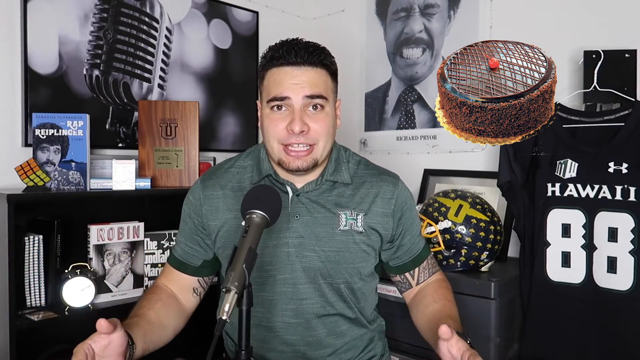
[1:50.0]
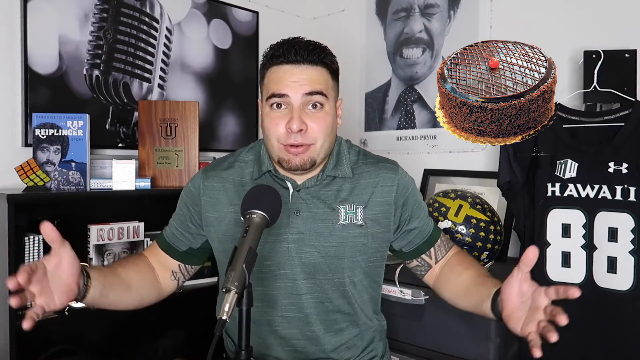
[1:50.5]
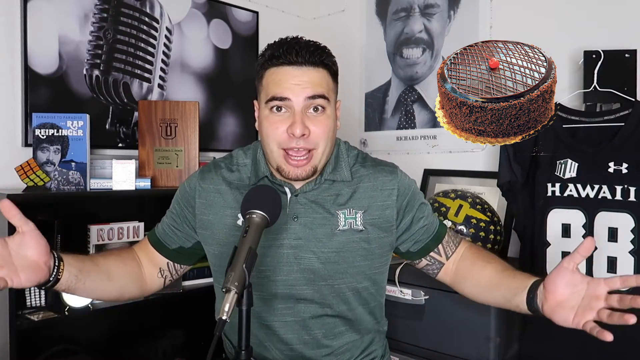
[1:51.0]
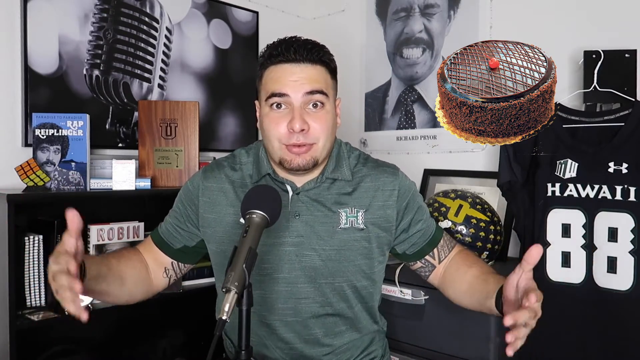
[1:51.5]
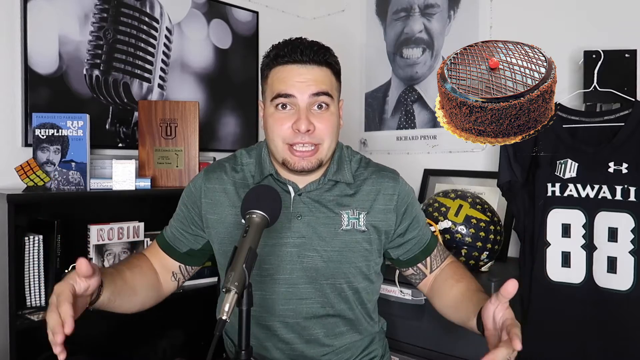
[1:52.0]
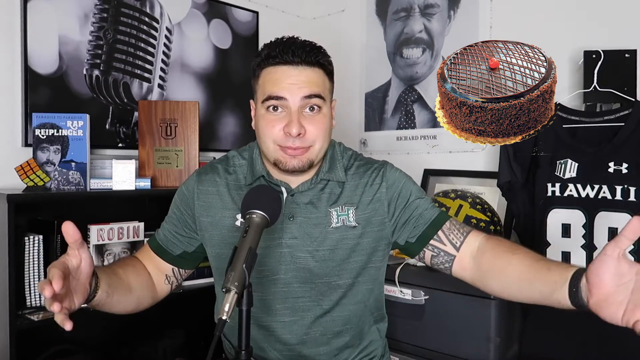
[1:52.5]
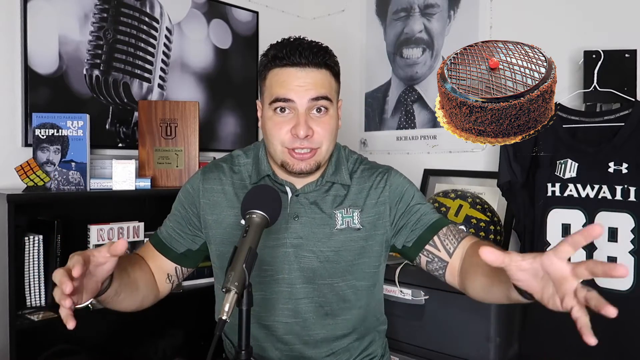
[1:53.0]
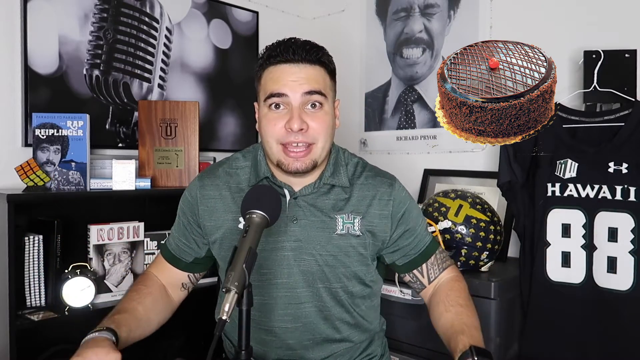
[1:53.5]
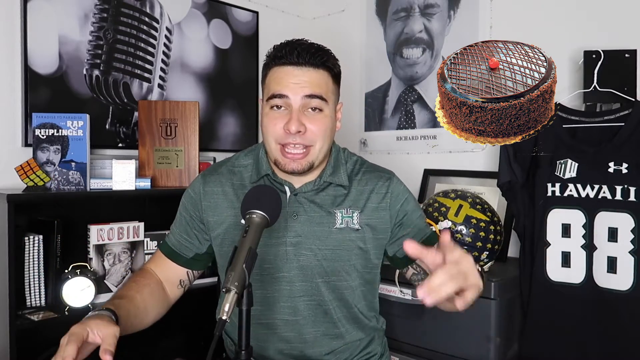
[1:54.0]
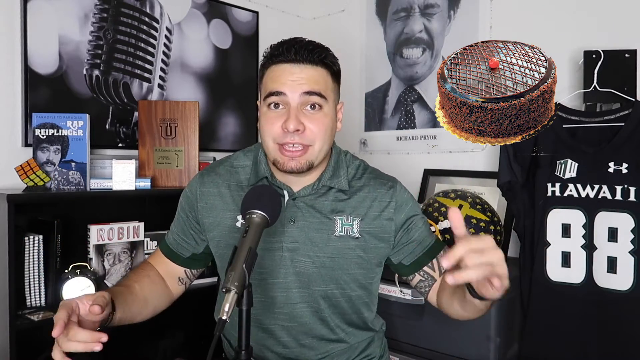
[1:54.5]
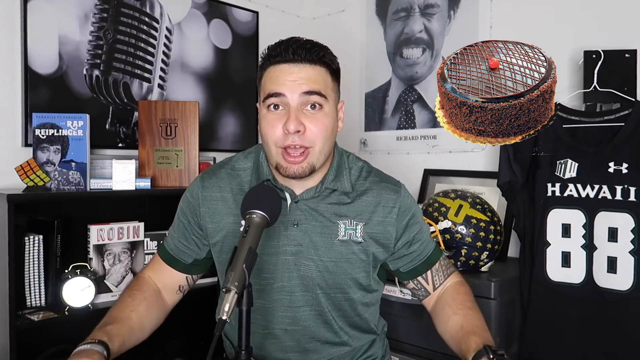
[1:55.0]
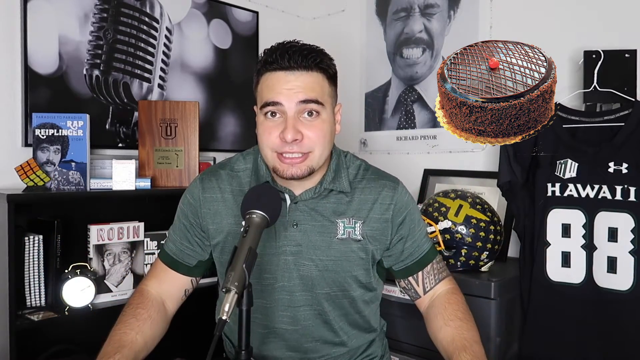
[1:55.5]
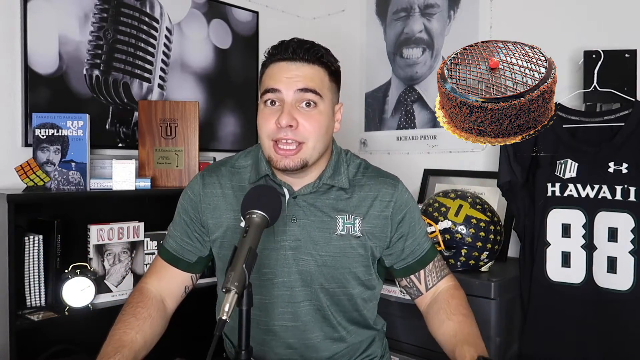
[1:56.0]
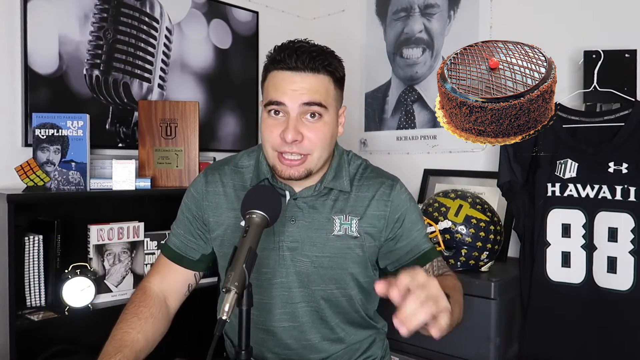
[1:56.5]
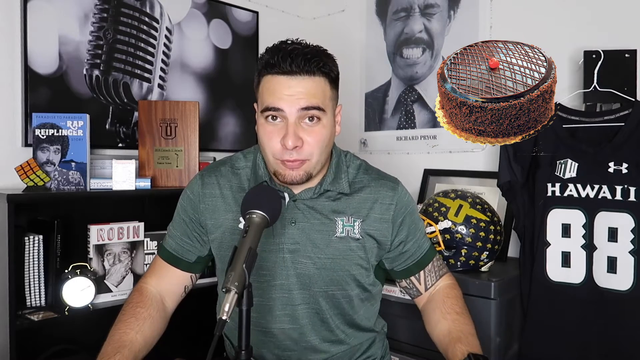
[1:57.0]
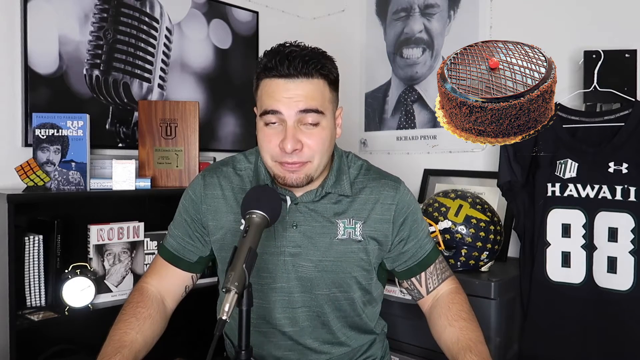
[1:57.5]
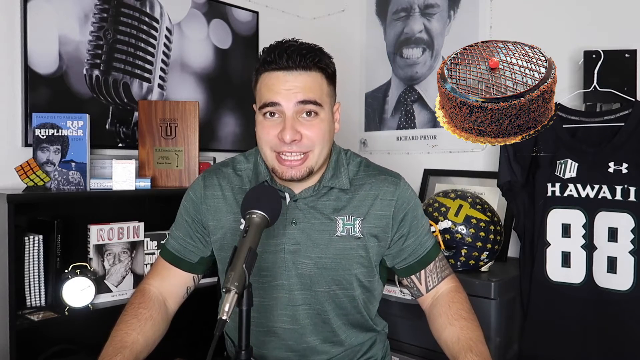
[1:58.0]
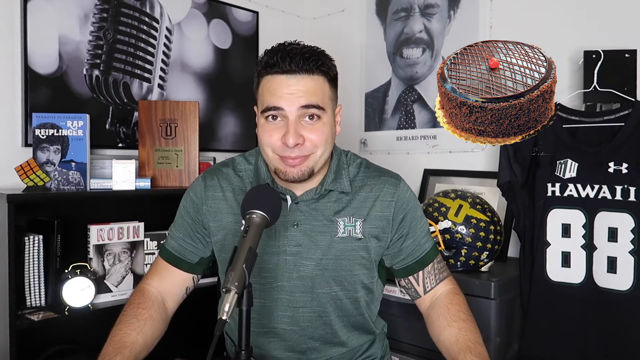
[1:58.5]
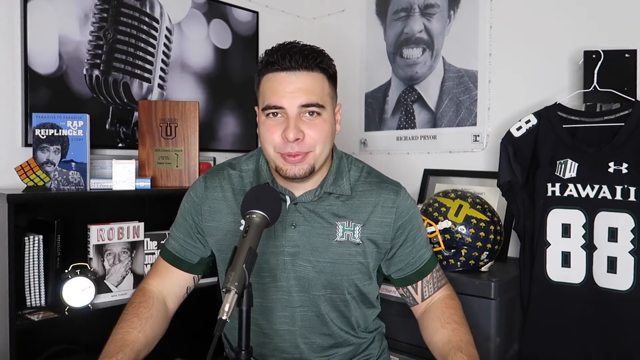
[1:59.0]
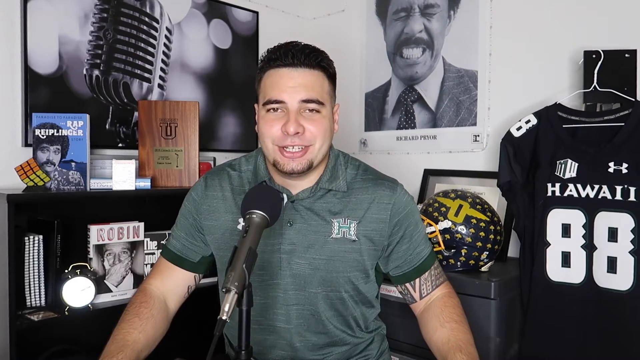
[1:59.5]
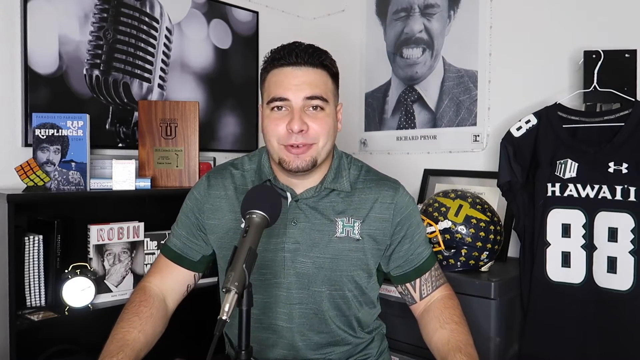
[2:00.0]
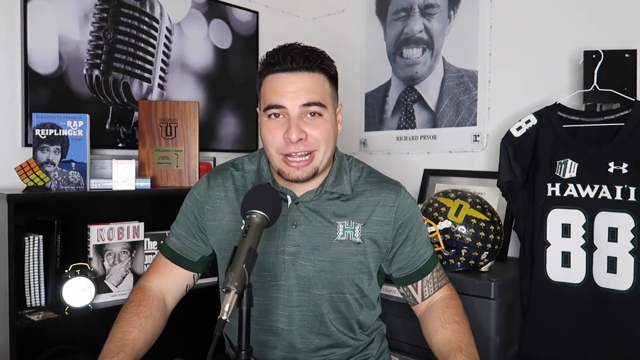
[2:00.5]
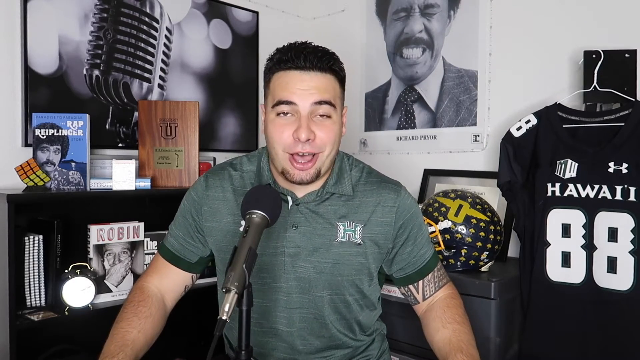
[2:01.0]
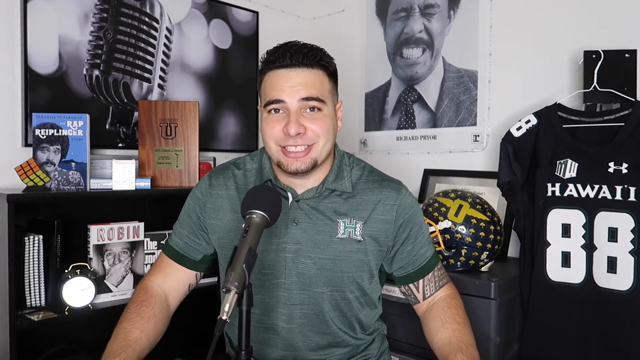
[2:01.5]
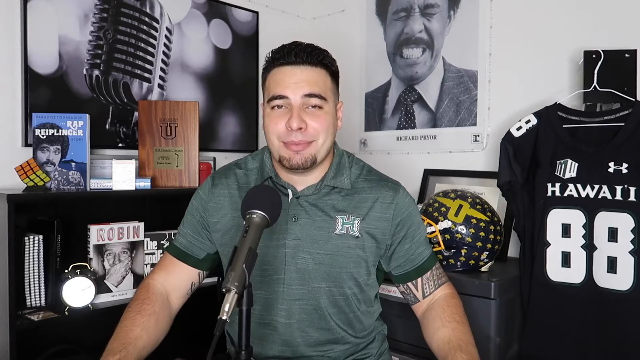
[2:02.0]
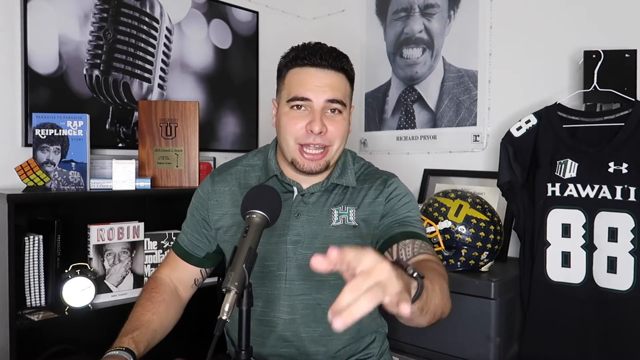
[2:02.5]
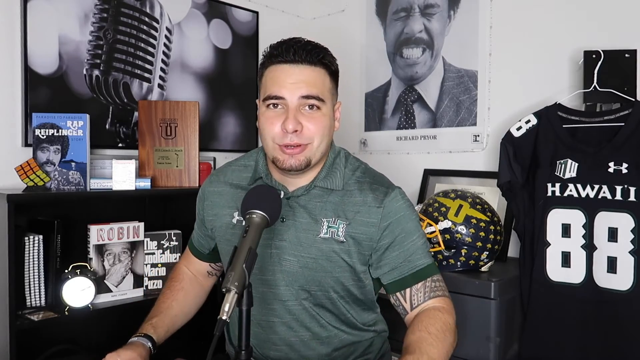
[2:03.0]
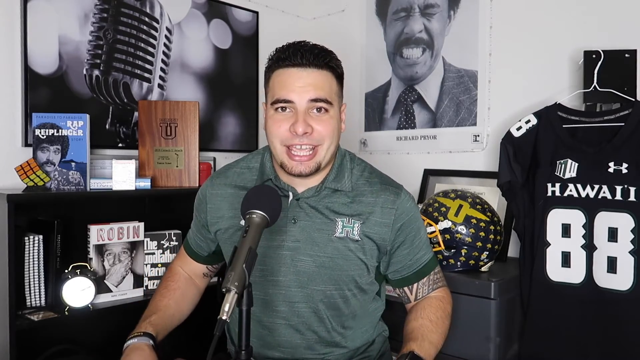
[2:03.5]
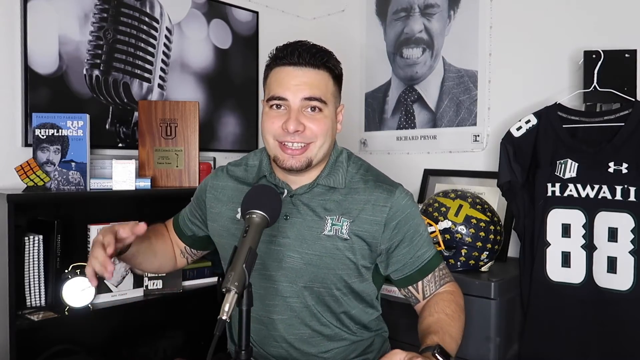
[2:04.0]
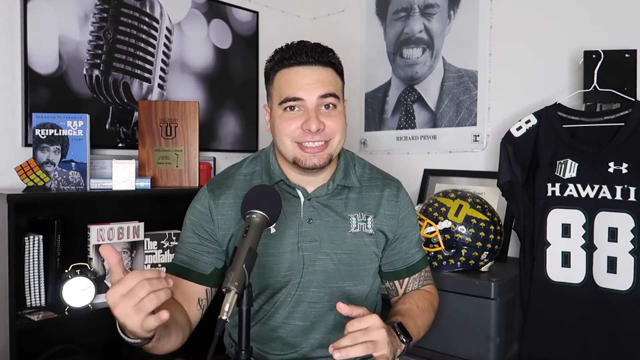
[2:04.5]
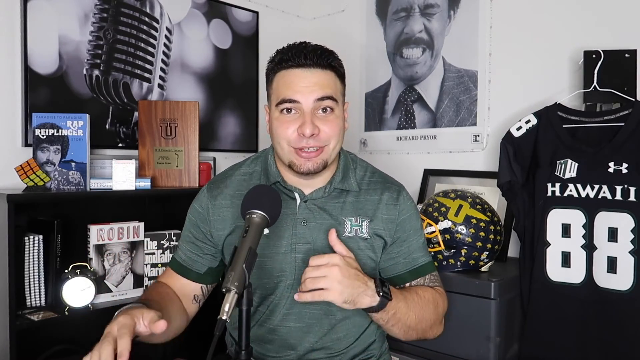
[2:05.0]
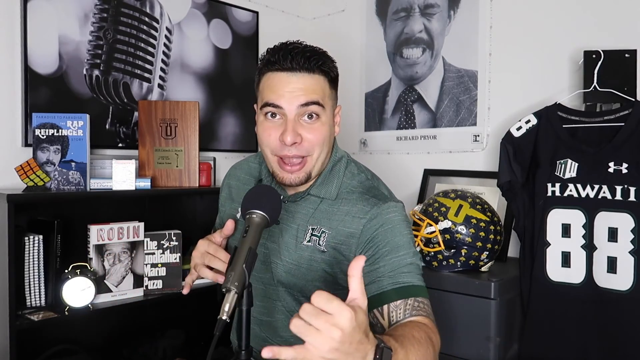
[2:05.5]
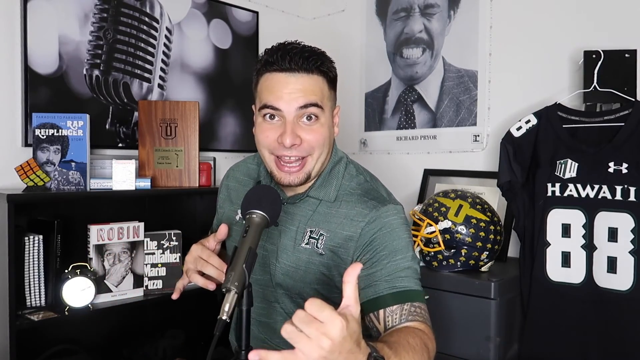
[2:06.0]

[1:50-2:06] The man in the green shirt with the H on it and gelled-up black hair shrugs both shoulders with his arms stretched outward as if in excitement while a chocolate cake is shown at the top right of the screen. The cake has a smattering of chocolate flakes on its outer rim and a crisscross fudge pattern topped by a cherry. He moves his hands from left to right and points at the screen several times as he talks. The cake then disappears. The man moves his head from left to right in a kind of dismissive way, as if he may be ending his speech, then smiles and points at the camera, excitedly moving his hands up and down as if marking each point he makes. As the video ends, he strikes an excited pose toward the camera, smiling, with one hand towards the wall and one hand towards the camera.